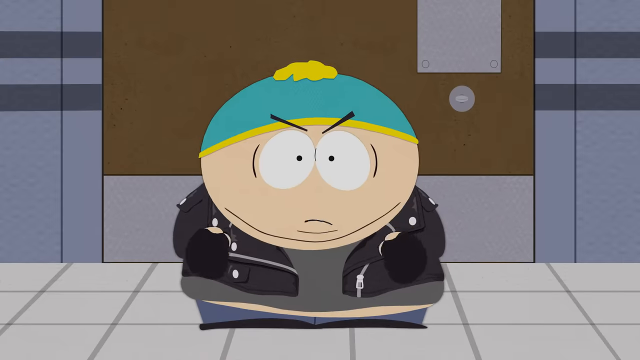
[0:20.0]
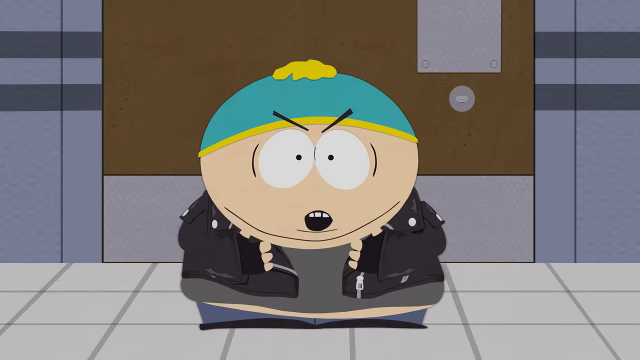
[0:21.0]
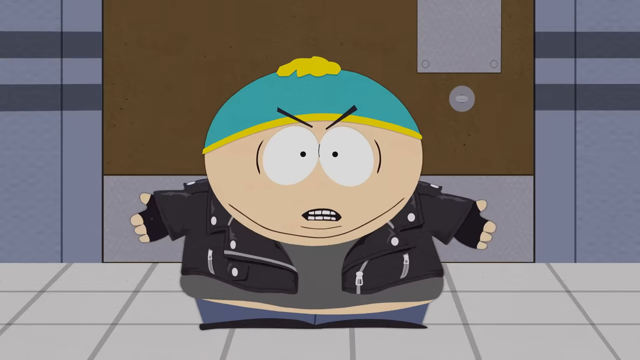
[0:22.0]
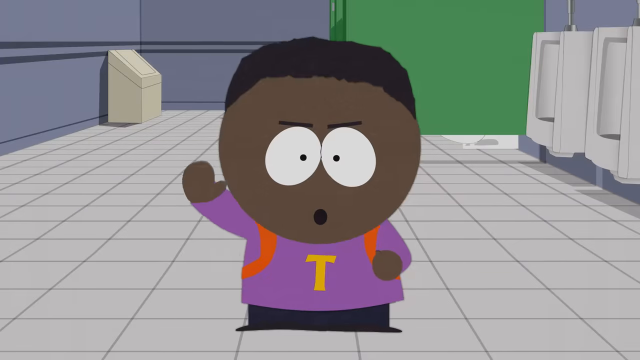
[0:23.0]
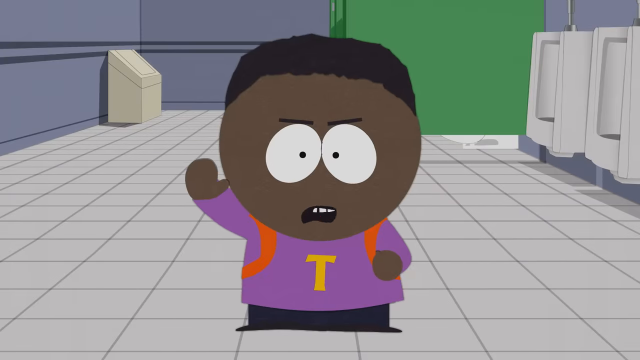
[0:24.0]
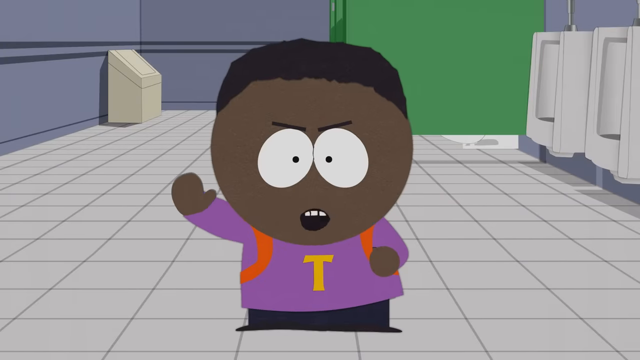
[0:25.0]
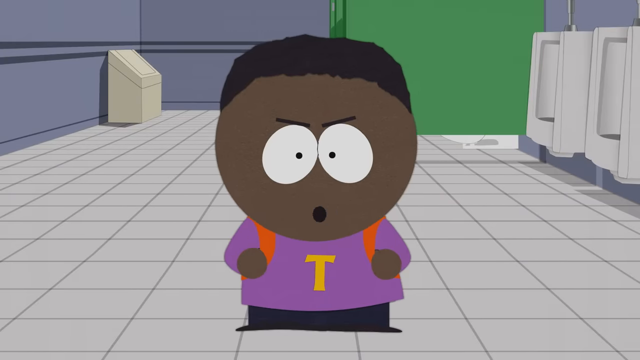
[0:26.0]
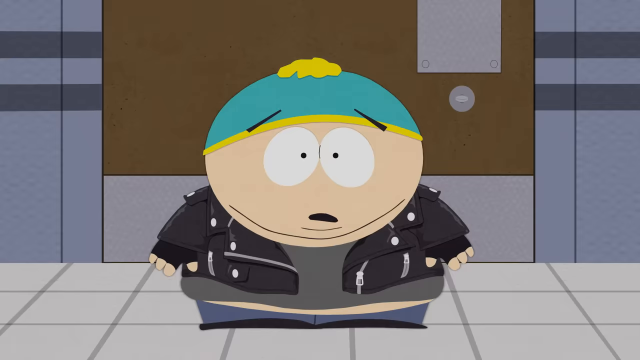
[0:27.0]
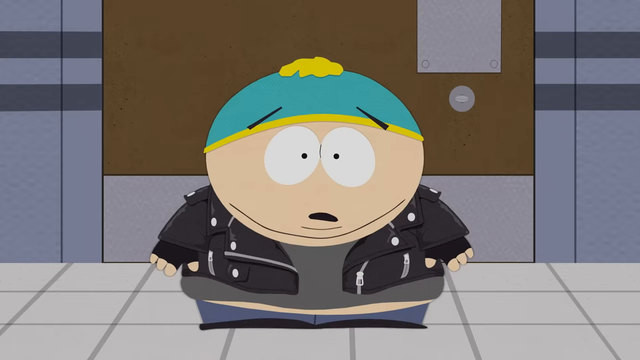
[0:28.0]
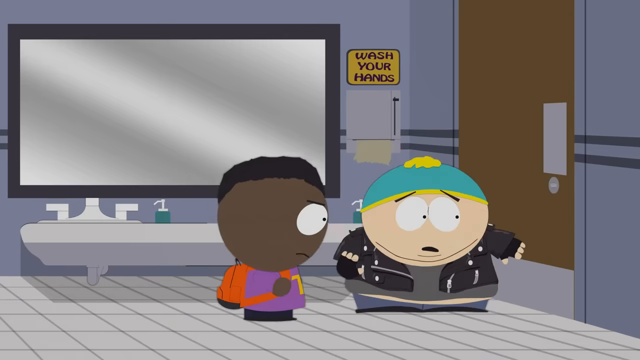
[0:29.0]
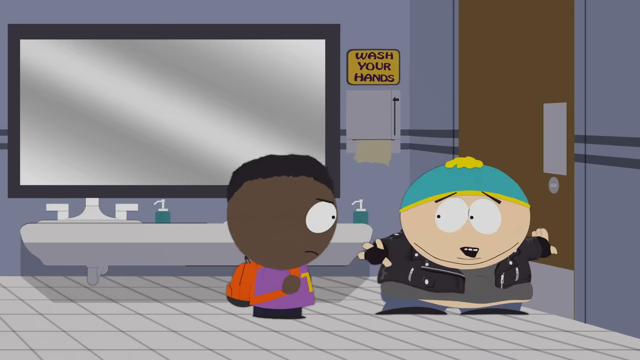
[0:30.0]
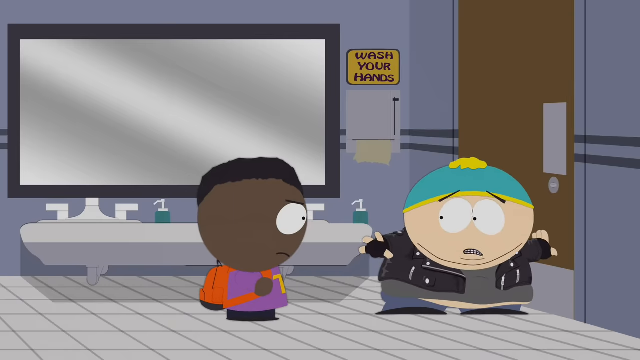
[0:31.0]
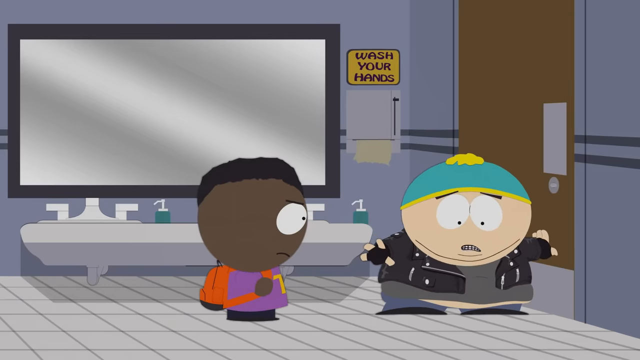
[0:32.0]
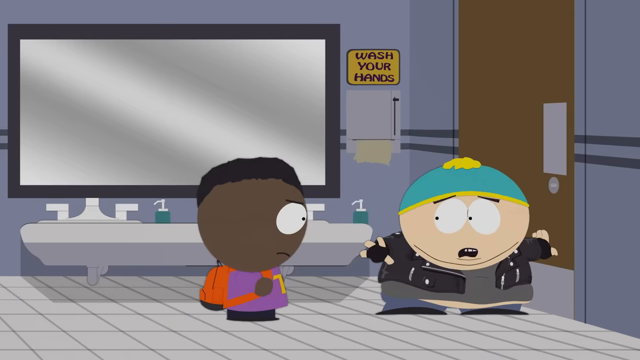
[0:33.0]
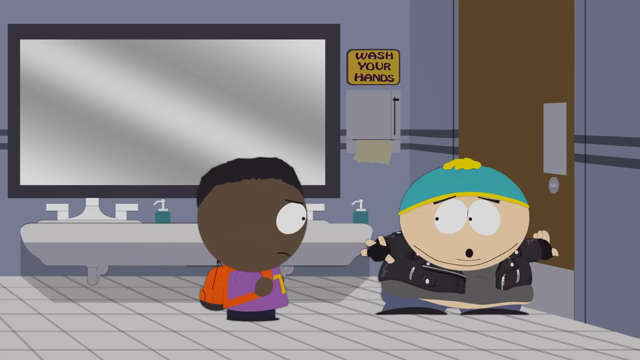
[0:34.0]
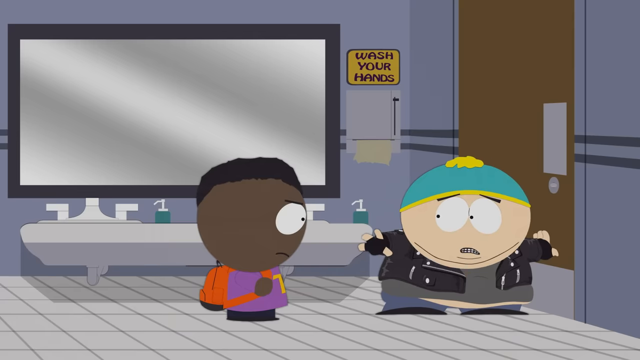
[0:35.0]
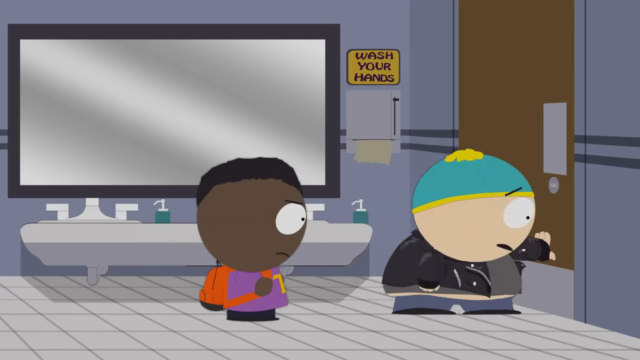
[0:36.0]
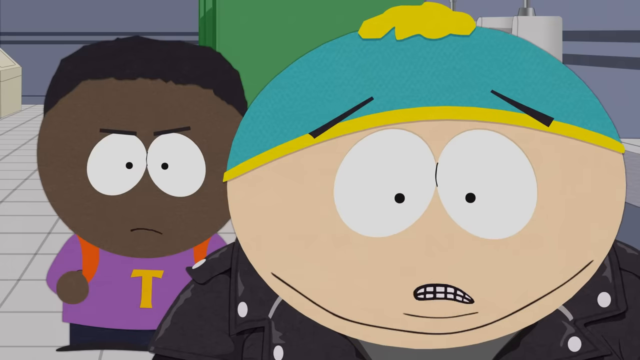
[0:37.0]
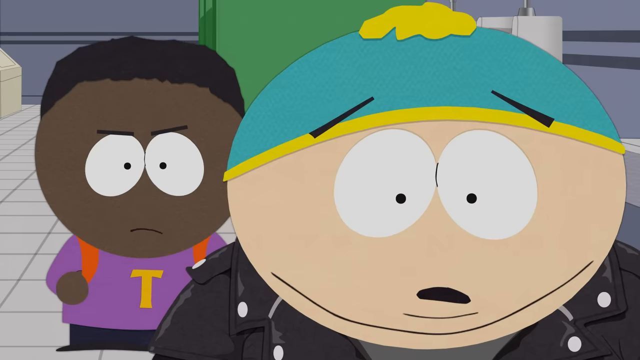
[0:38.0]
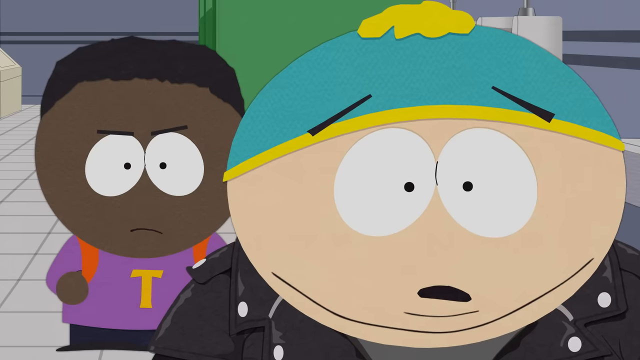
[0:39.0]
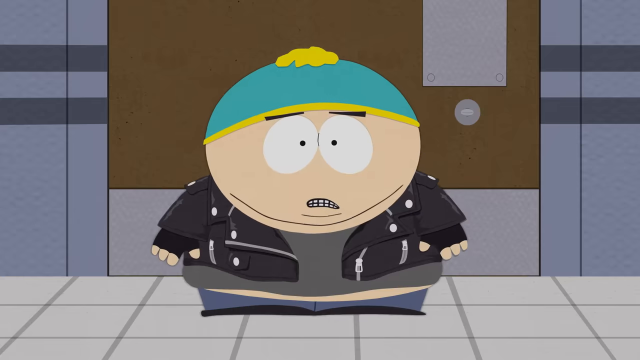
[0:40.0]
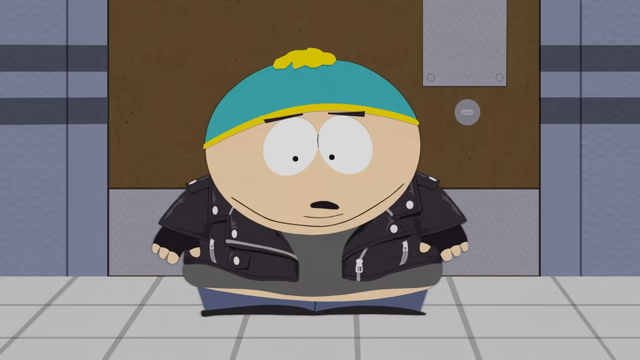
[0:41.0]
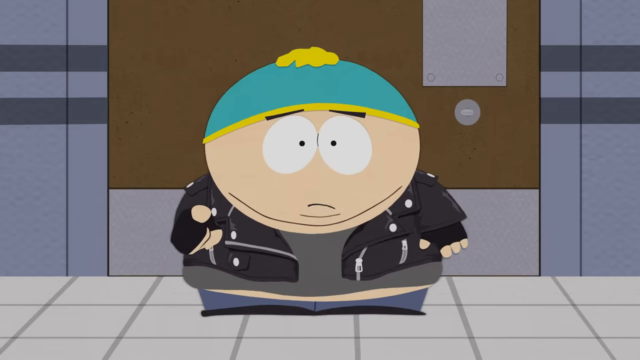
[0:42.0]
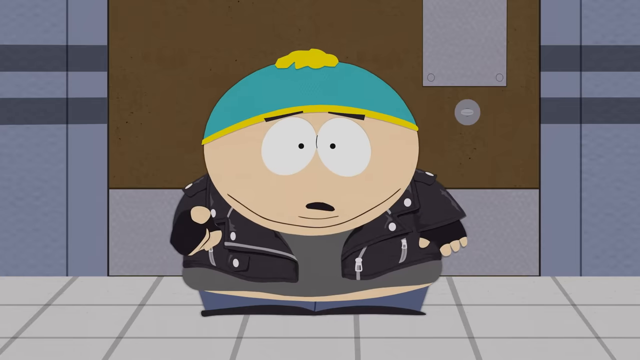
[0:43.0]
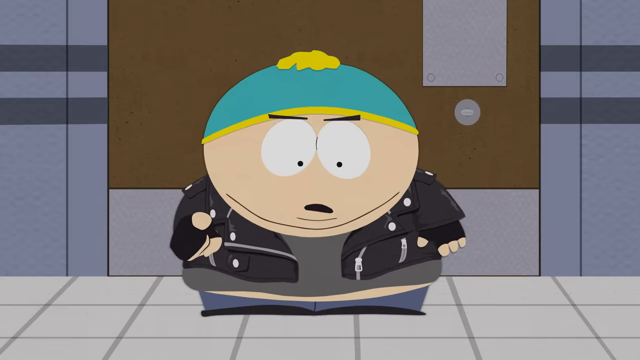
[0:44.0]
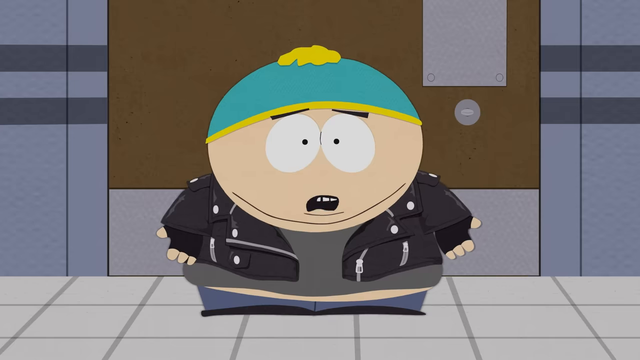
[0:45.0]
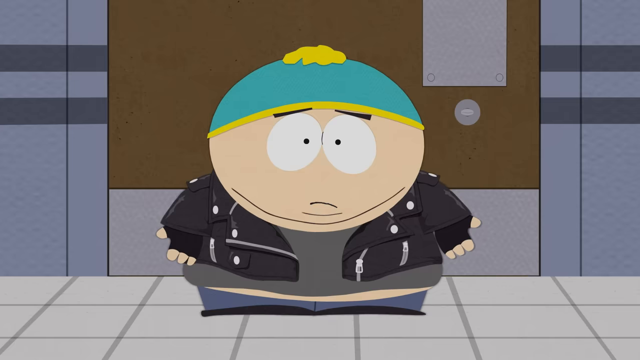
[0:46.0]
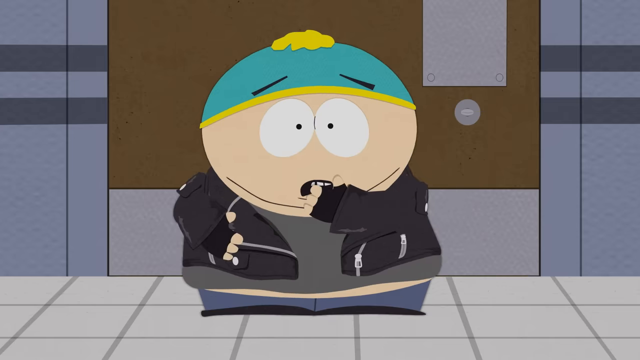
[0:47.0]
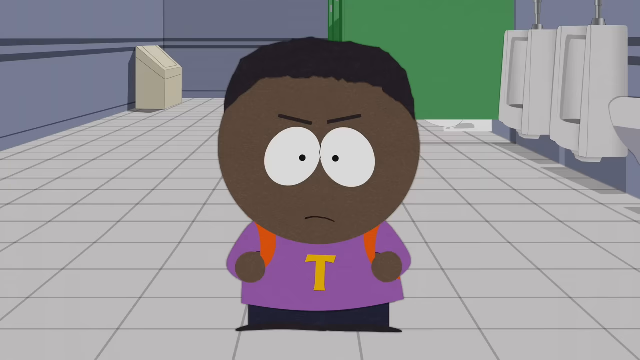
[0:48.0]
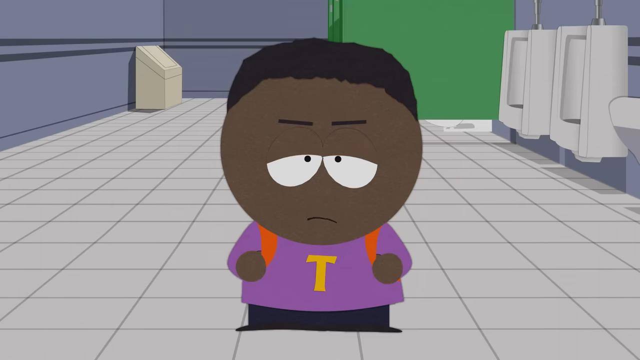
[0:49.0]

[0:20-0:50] In the bathroom, the two characters appear to be arguing, gesticulating very widely. It appears to be a men's bathroom because there are urinals. One character stops the other from leaving by holding the door closed and appears very worried; he turns towards the door, then turns away from it to face the other character. He looks down a lot and looks quite ashamed, while the other character does not look very impressed. The character standing closest to the door has a large round face and appears to be Caucasian. He wears a very tight bright teal beanie with a yellow trim around the edge and a yellow pom-pom of sorts on top. He has large white eyes with angry-looking black eyebrows and wears a black leather jacket with various silver accents over a dark grey shirt, dark blue trousers, and black shoes. He also wears black fingerless gloves and has a thumb and only three fingers on each hand. Behind him, the bathroom door is mostly brown, with silver metal accents across the base and on the handle.